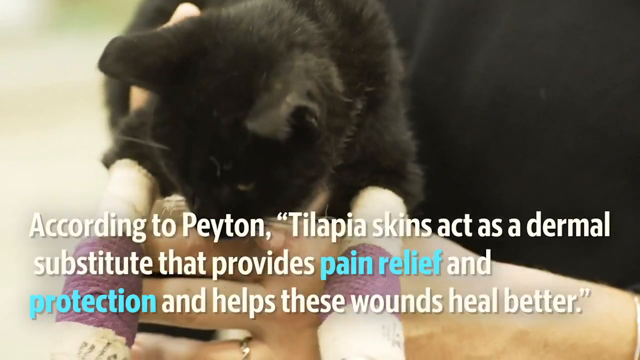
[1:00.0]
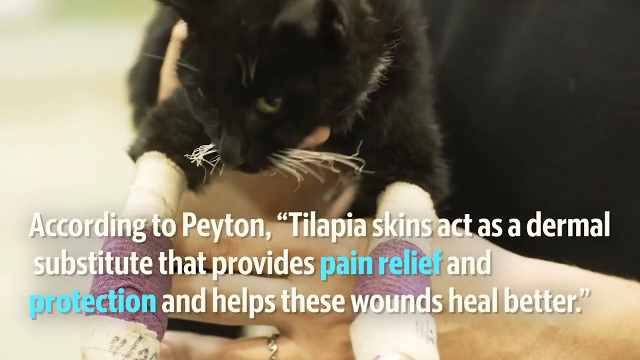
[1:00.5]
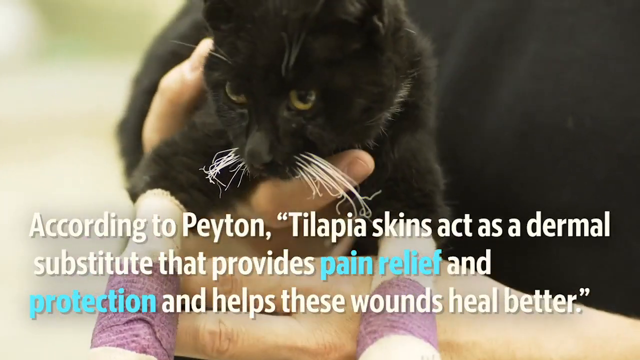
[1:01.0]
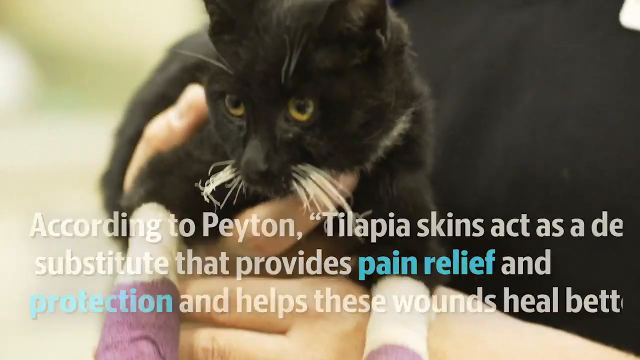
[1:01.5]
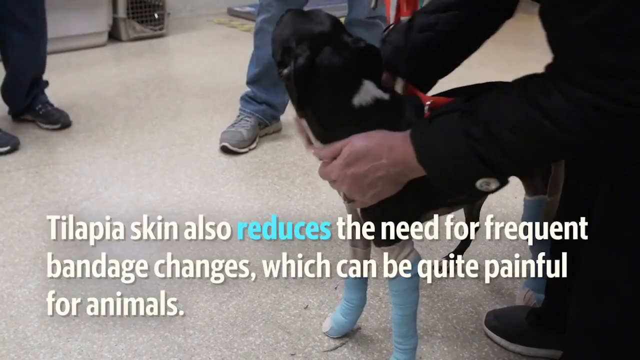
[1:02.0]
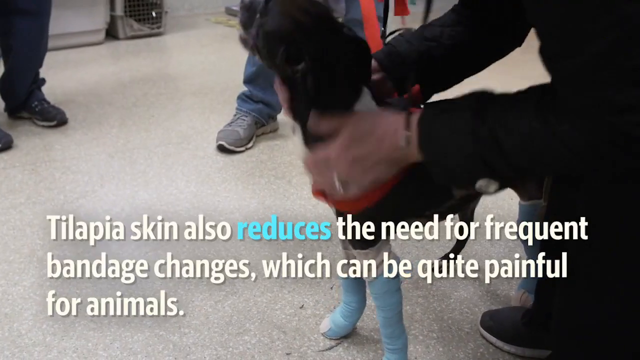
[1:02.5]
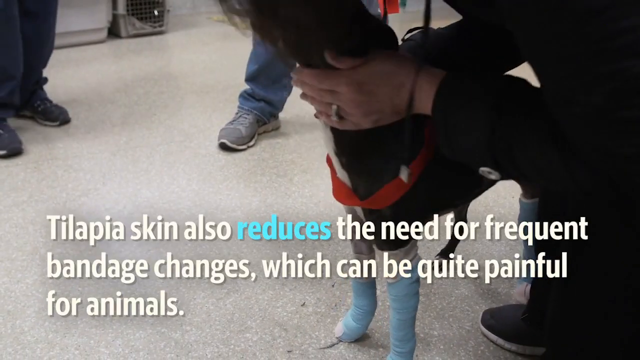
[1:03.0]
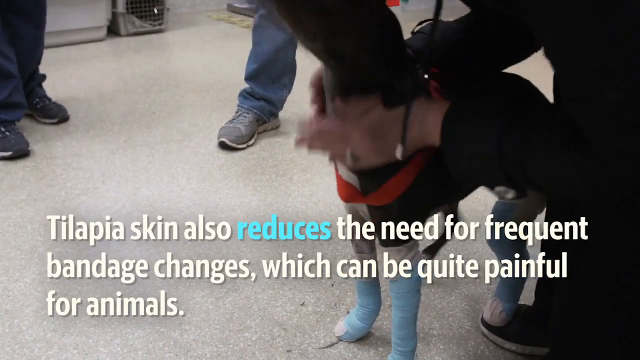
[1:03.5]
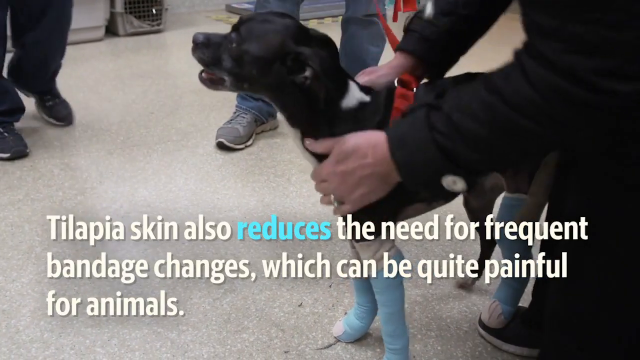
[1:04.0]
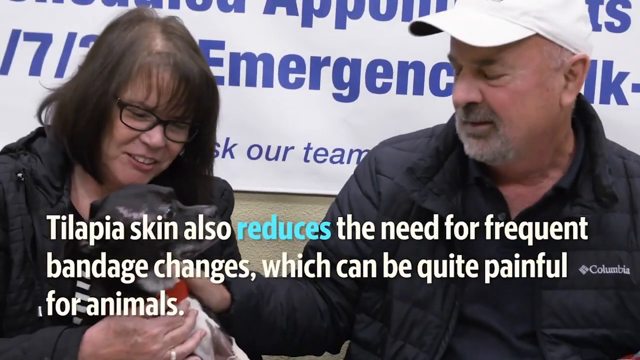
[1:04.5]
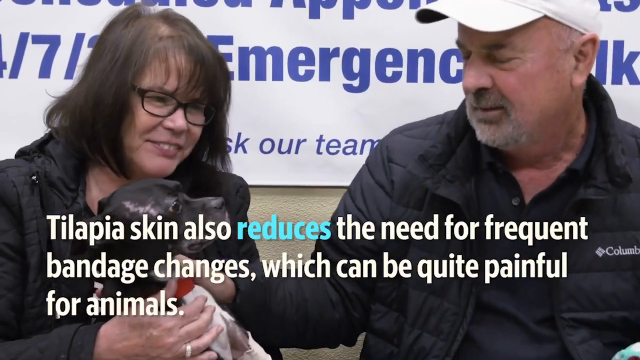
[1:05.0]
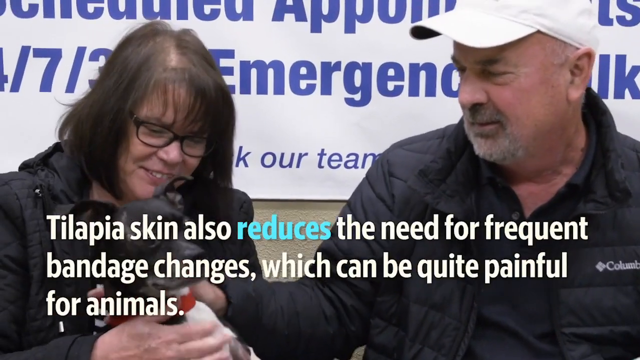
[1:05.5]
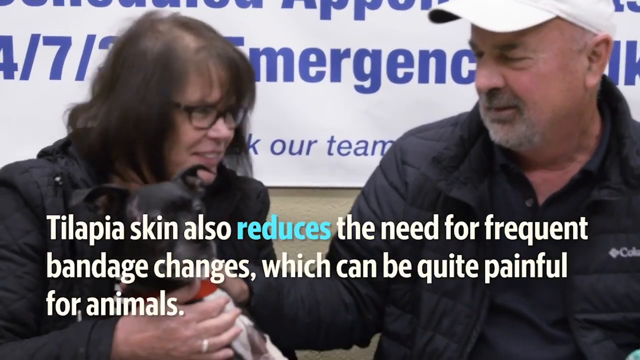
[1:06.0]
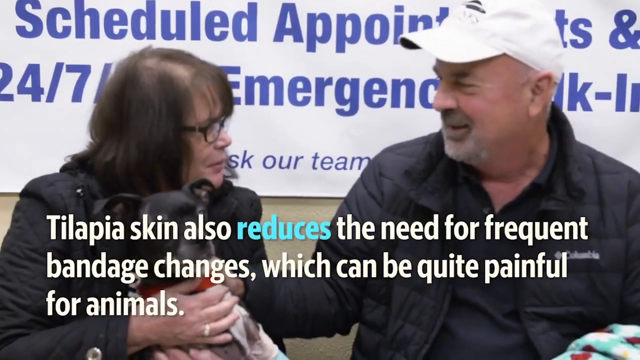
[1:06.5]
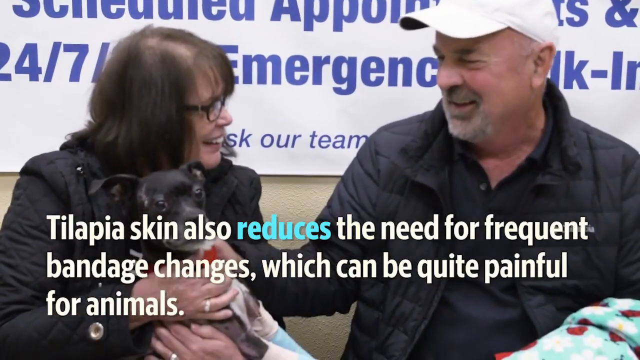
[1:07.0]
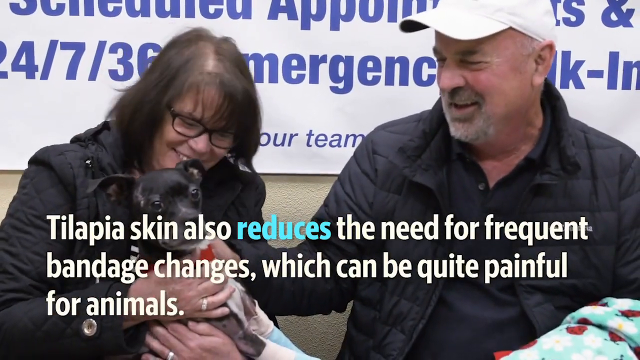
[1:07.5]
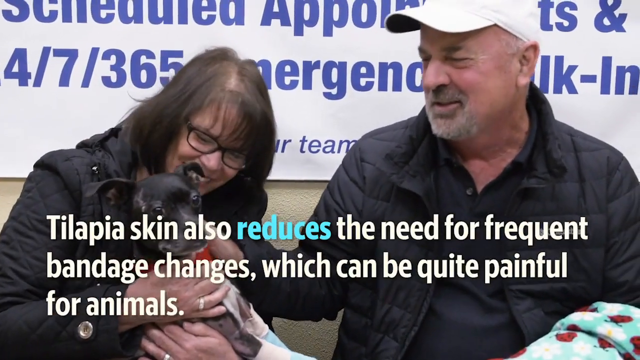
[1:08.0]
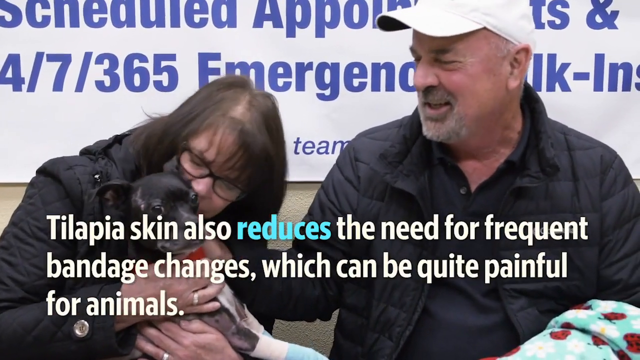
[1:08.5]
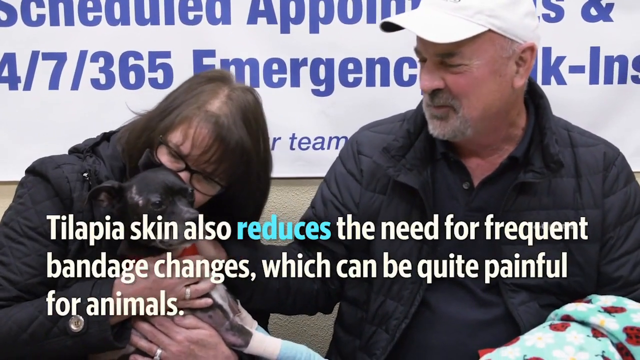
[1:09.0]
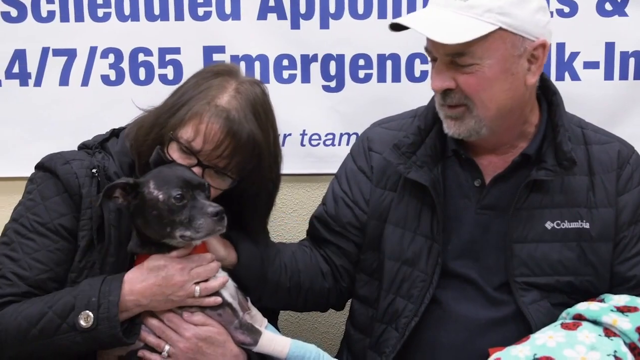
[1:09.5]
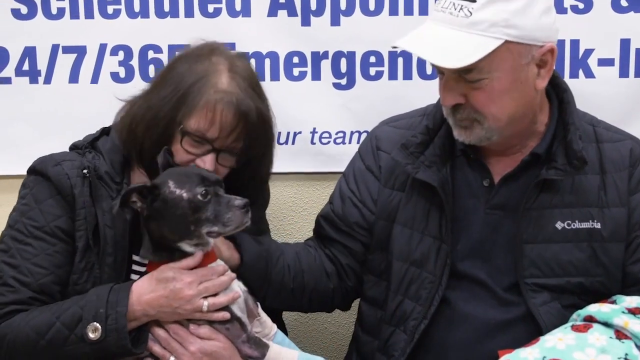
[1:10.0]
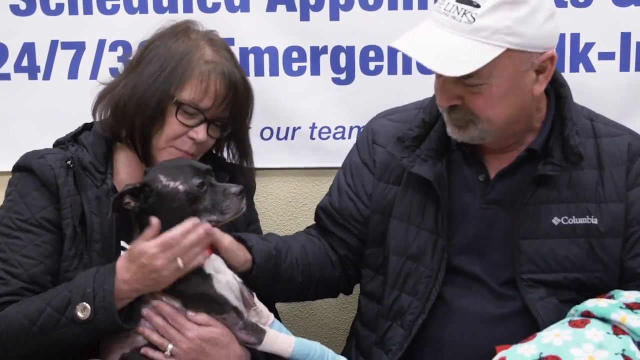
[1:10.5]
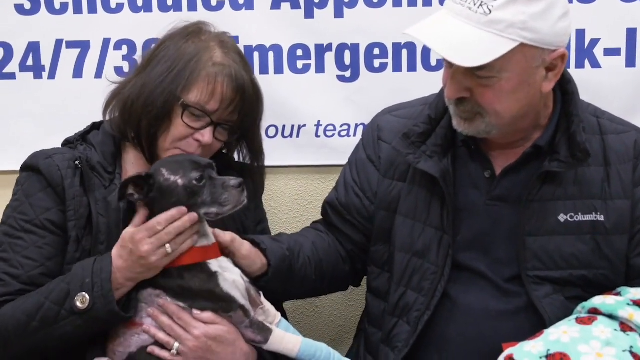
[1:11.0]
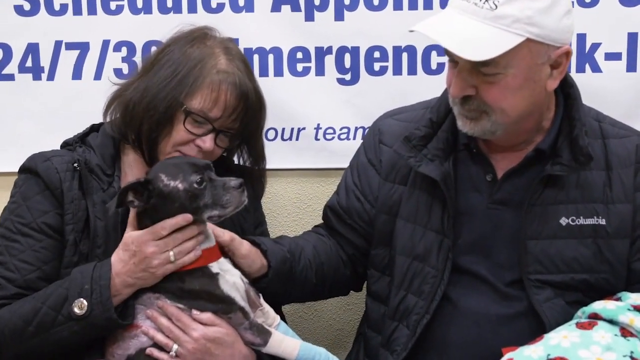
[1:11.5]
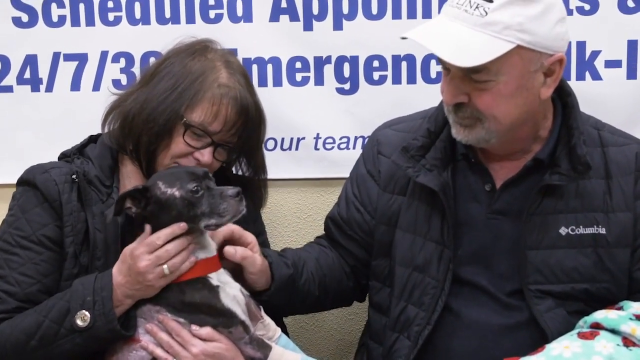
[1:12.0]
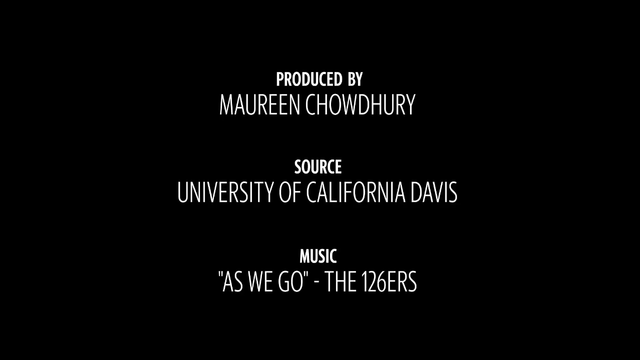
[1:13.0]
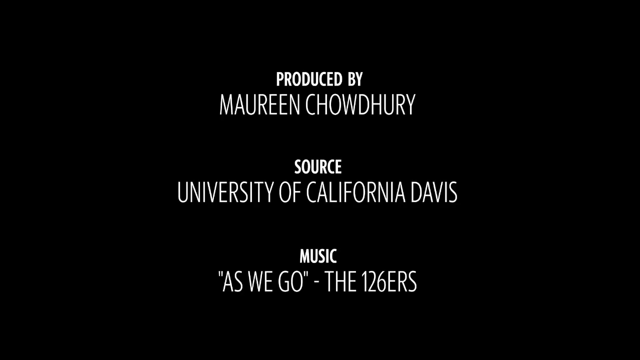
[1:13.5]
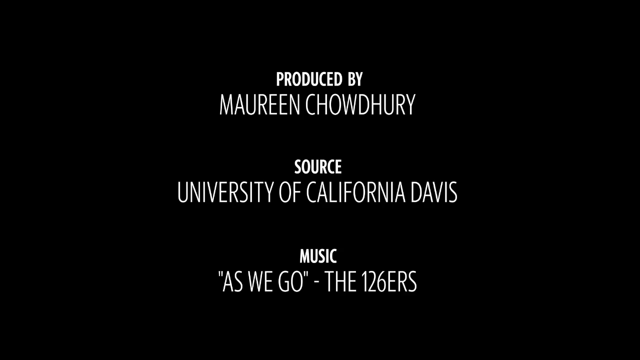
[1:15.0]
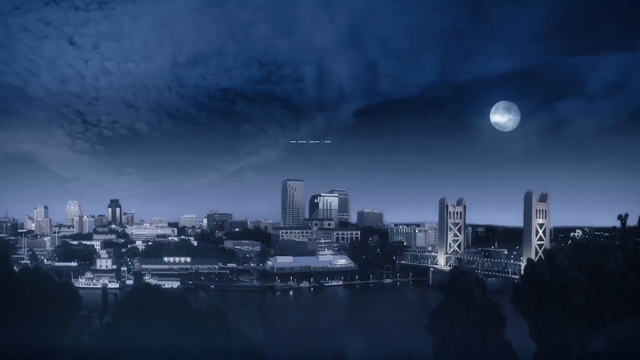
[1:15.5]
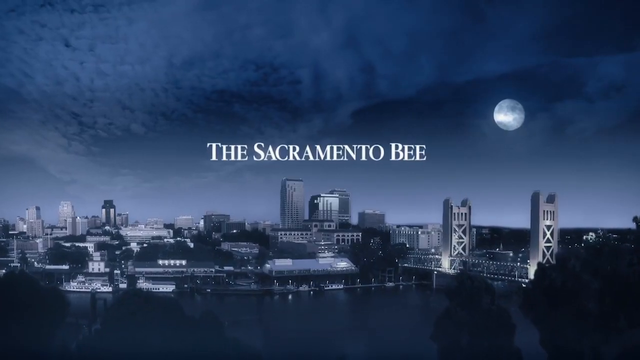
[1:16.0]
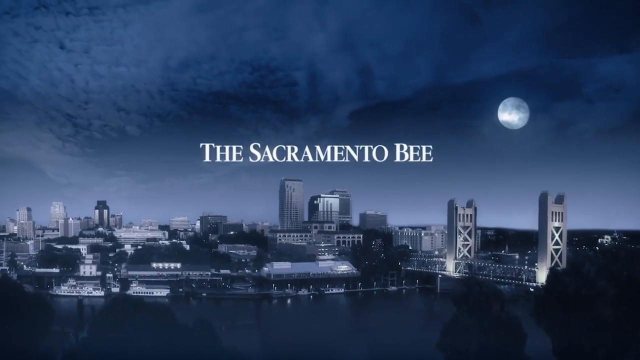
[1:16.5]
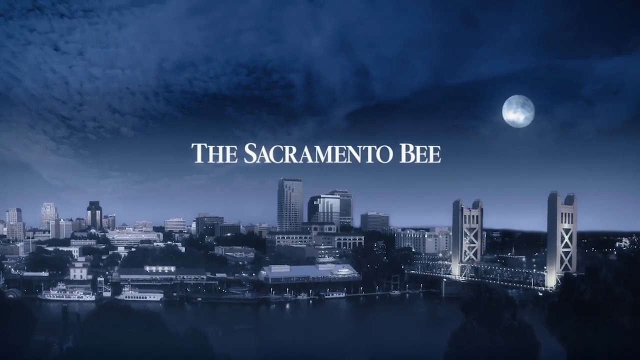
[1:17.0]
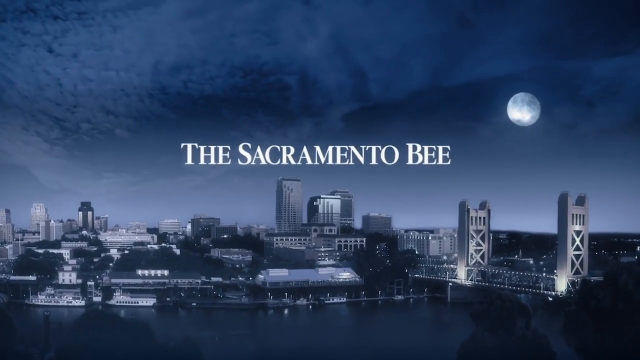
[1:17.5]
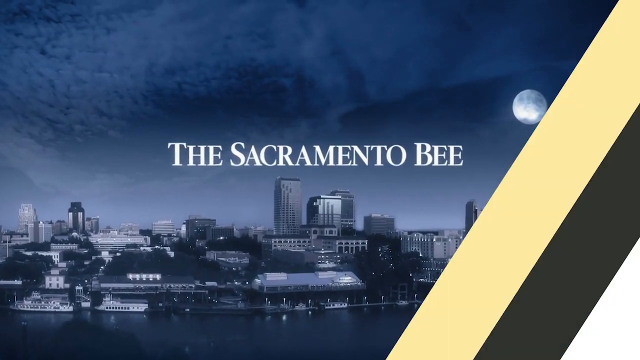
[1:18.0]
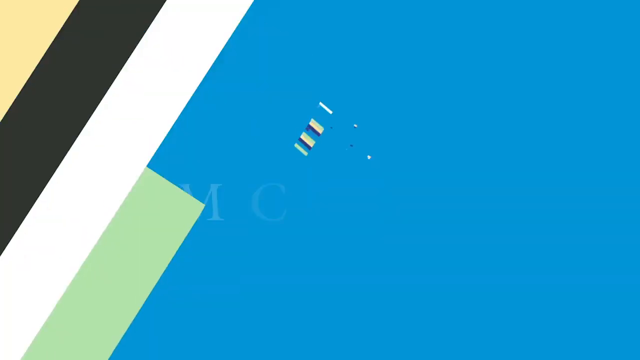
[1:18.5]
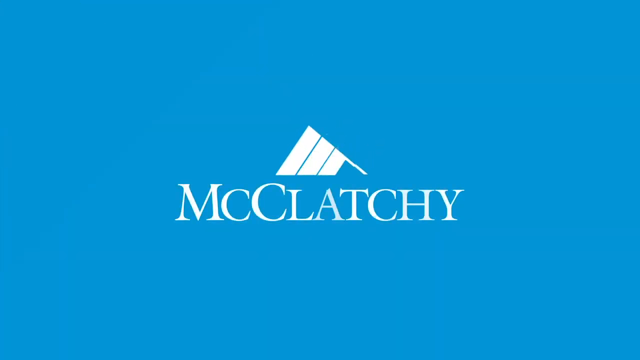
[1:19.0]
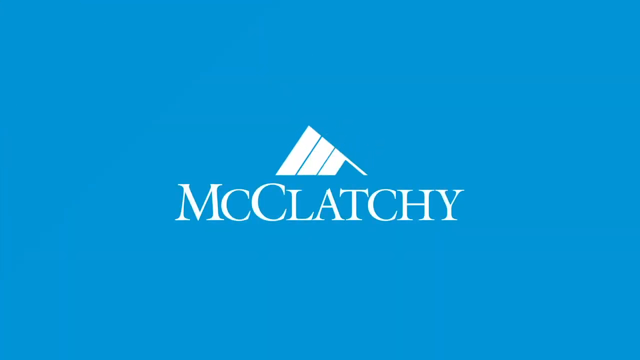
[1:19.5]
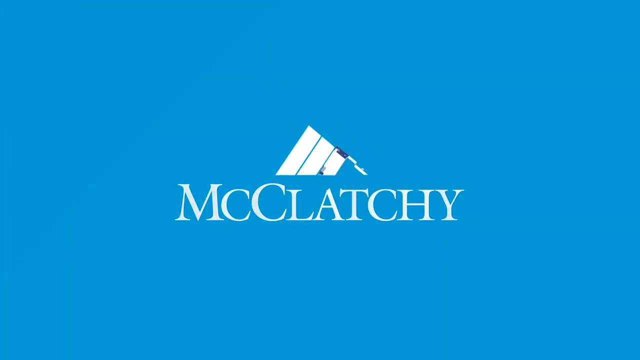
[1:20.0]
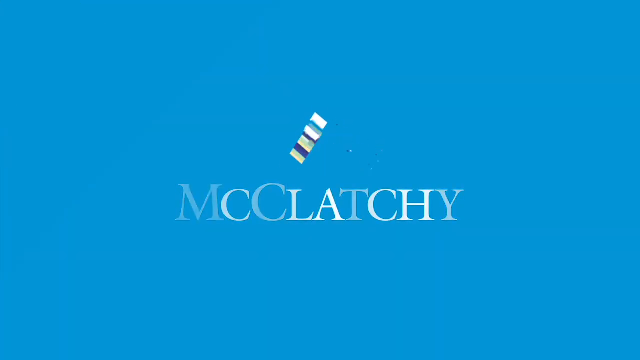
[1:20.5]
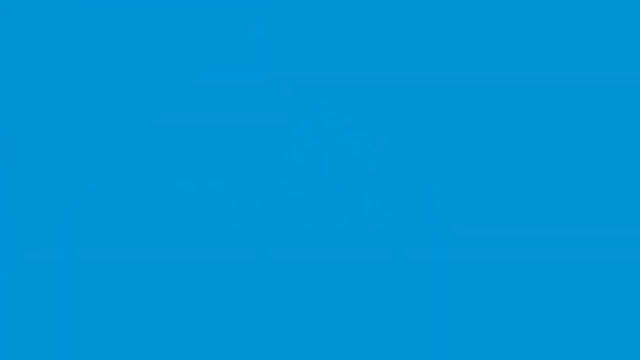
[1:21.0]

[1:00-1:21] Words on the video read: "according to Peyton tilapia skins act as a dermal substitute that provides pain relief and protection and helps these wounds heal better." Further text reads: "Tilapia skin also reduces the need for frequent bandage changes which can be quite painful for animals." A family is then reunited with a dog; it appears that all of his legs have been burned and treated by the veterinary office. A woman in a black coat loves on her little black and white dog, which wears a red collar. Credits then read "produced by Maureen Child-Hurry" with the source "University of California, Davis," and credit the music to the 126ers. The last part of the video reads "the Sacramento Bee and McClatchy," possibly the production studio behind the video.